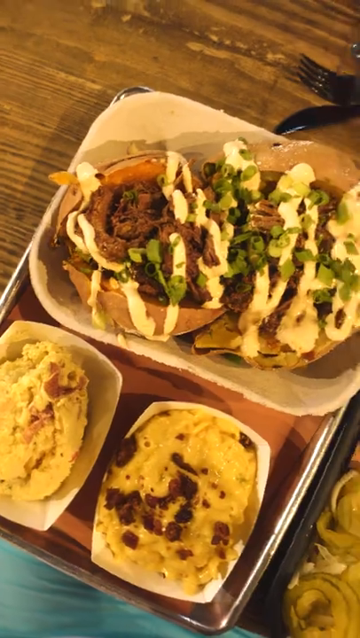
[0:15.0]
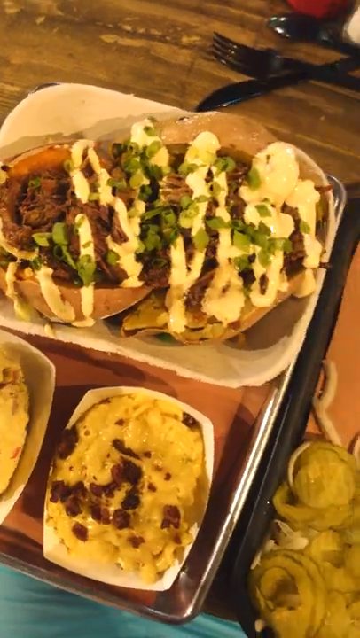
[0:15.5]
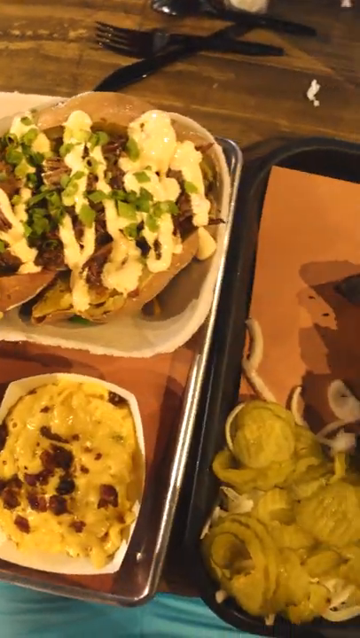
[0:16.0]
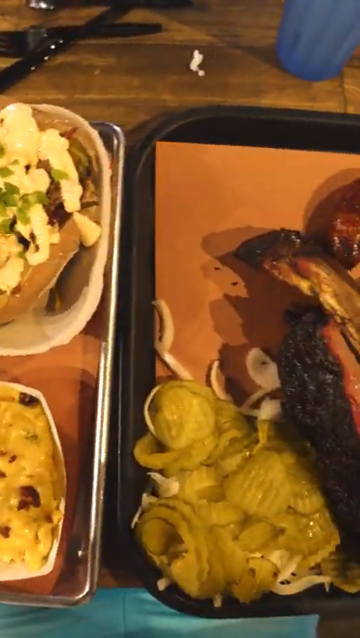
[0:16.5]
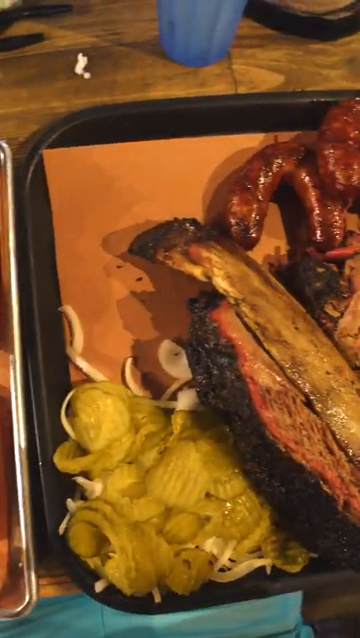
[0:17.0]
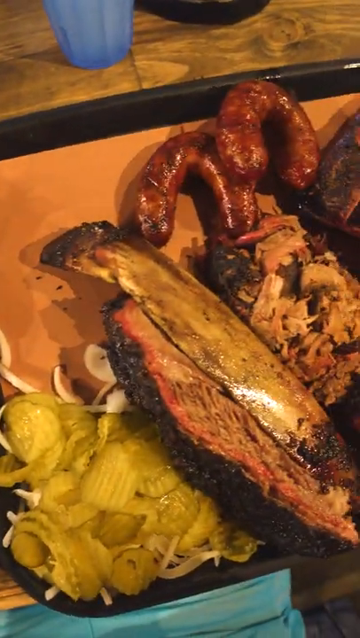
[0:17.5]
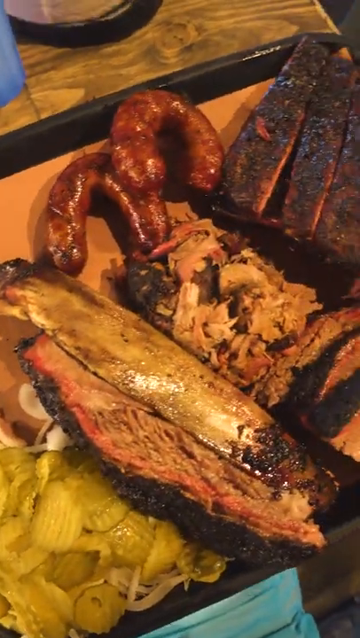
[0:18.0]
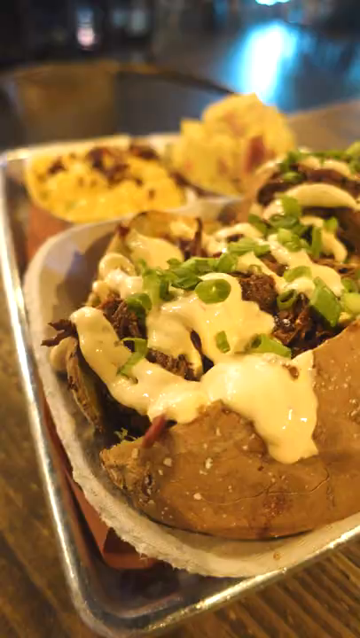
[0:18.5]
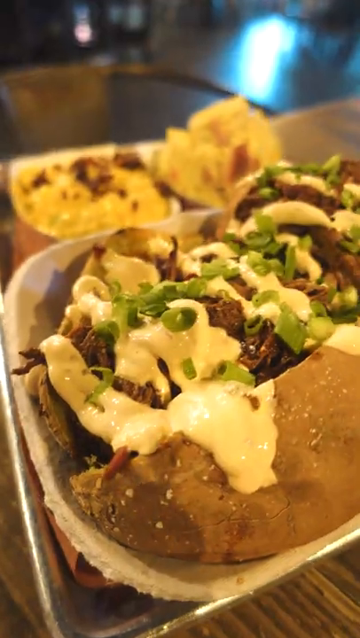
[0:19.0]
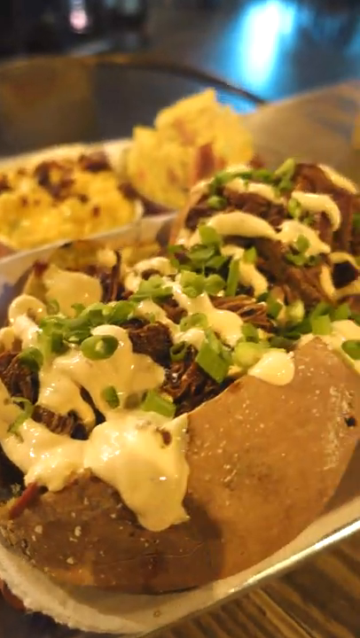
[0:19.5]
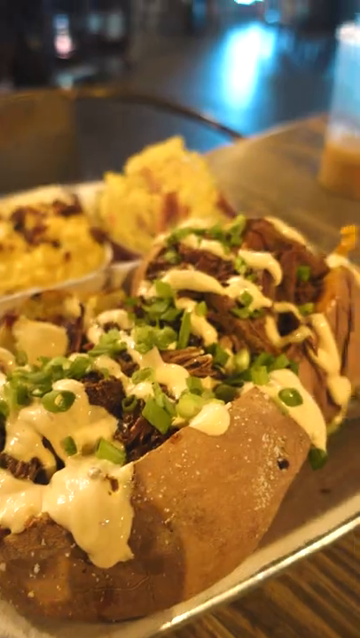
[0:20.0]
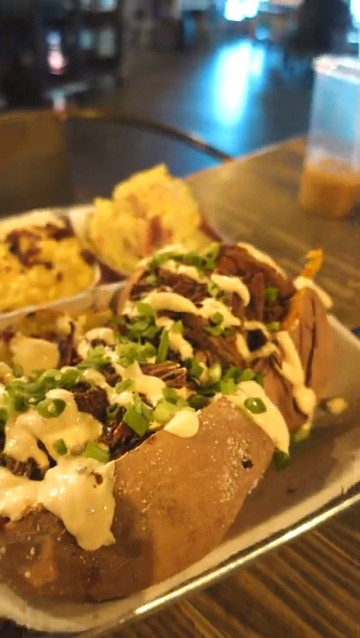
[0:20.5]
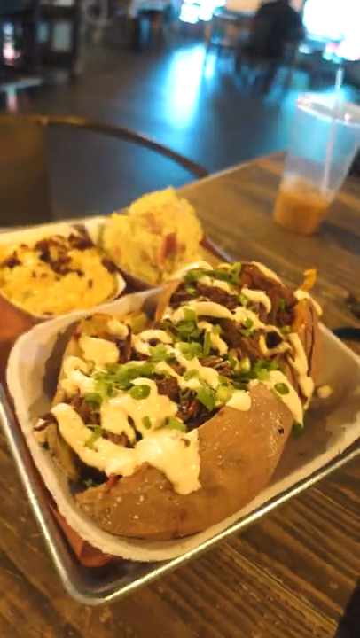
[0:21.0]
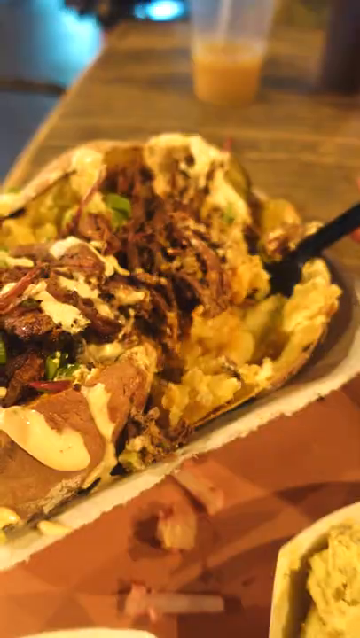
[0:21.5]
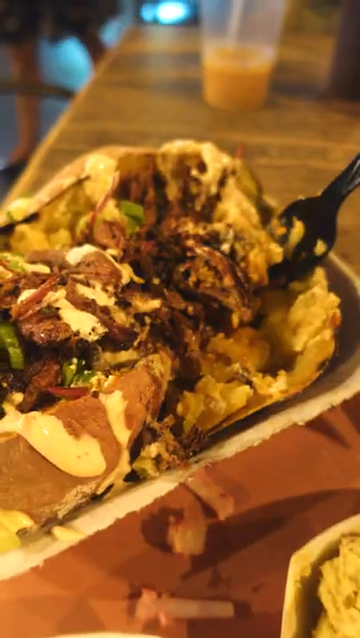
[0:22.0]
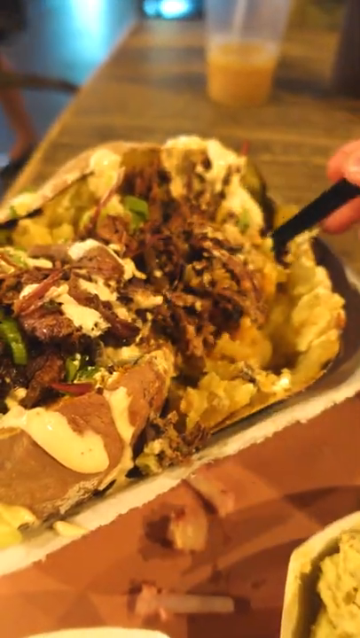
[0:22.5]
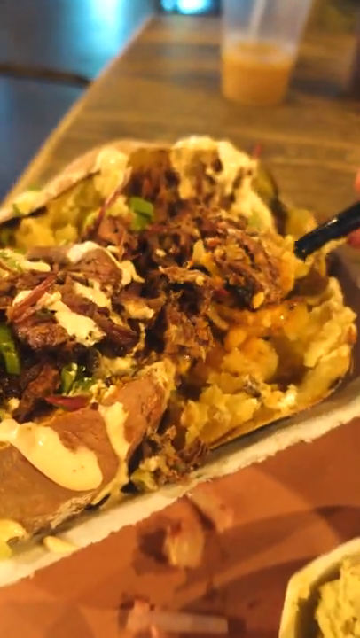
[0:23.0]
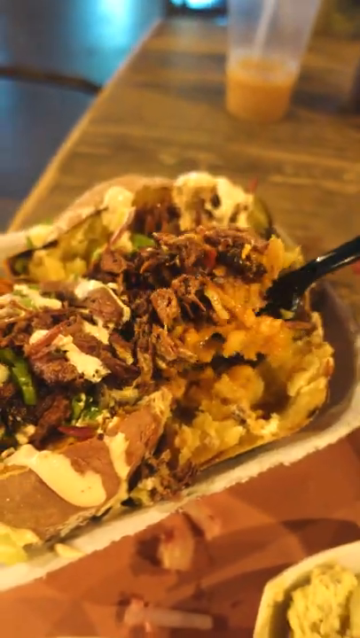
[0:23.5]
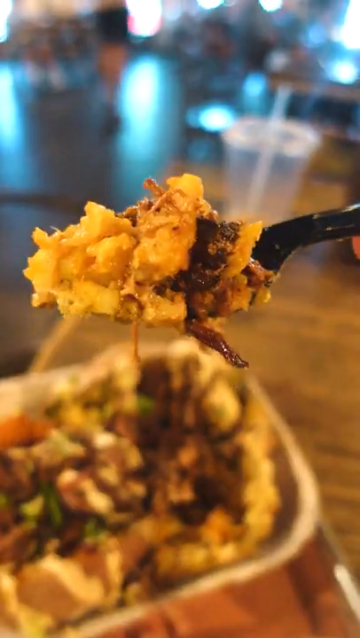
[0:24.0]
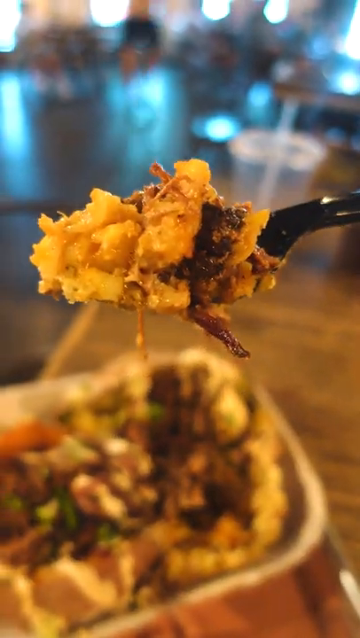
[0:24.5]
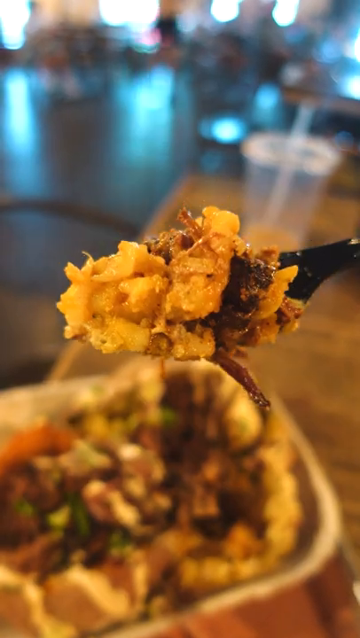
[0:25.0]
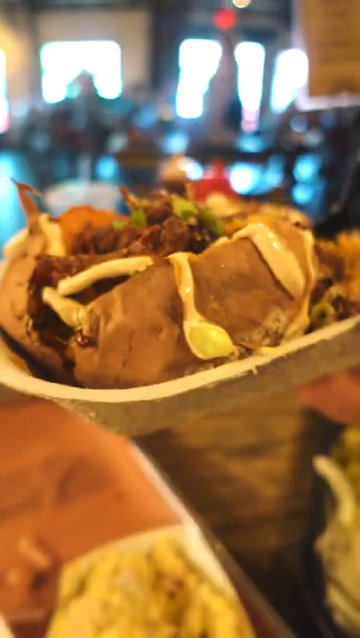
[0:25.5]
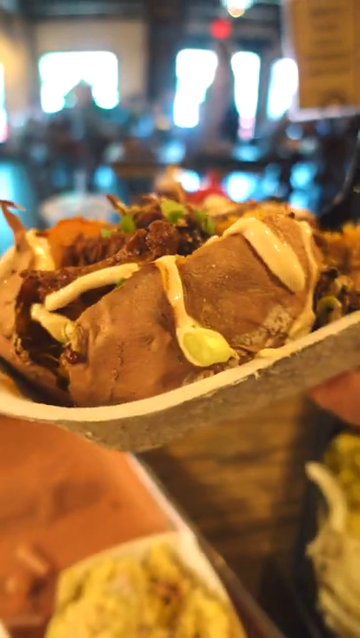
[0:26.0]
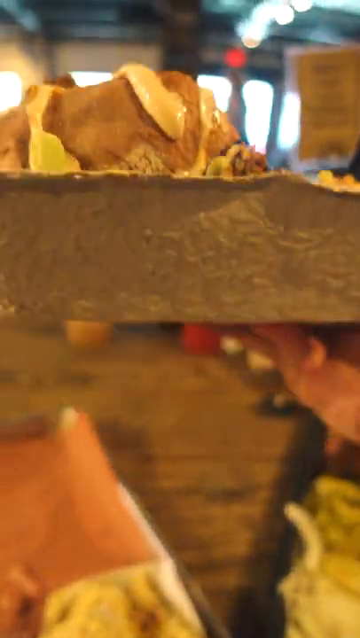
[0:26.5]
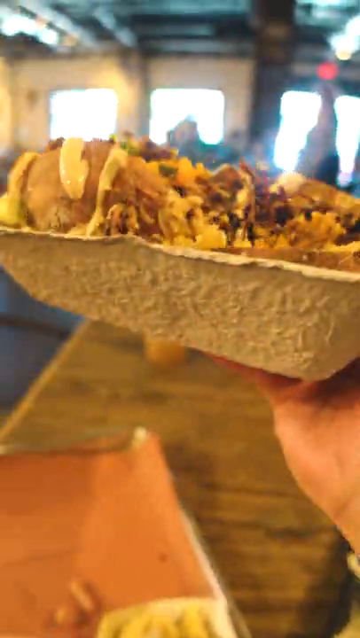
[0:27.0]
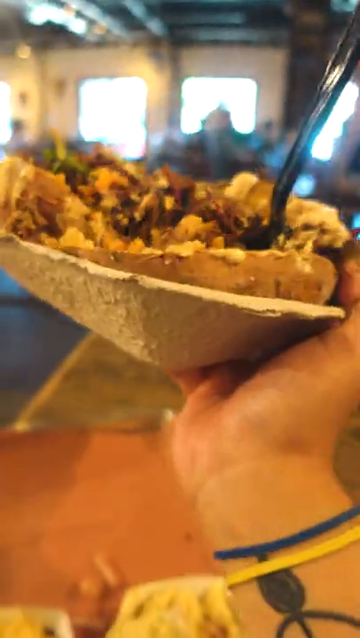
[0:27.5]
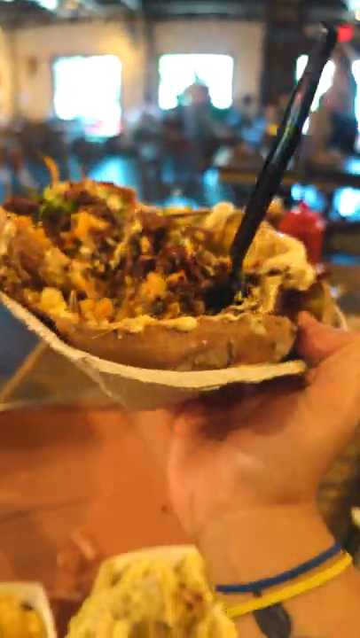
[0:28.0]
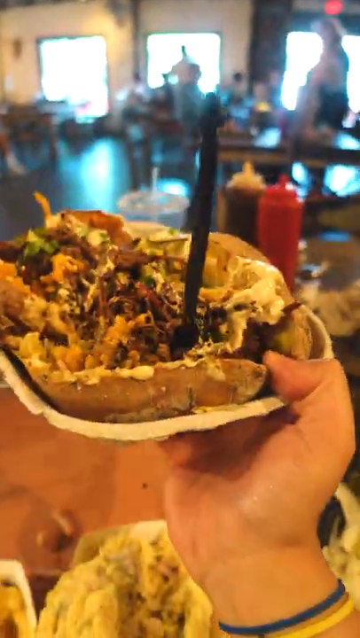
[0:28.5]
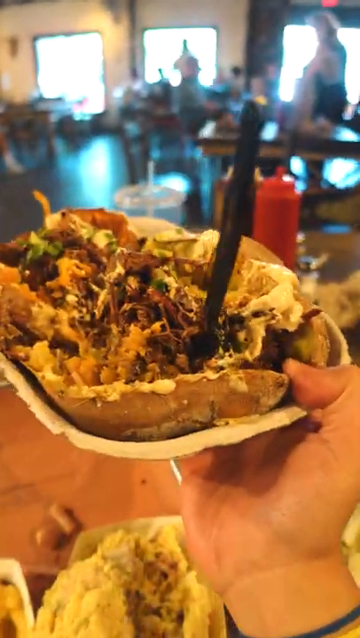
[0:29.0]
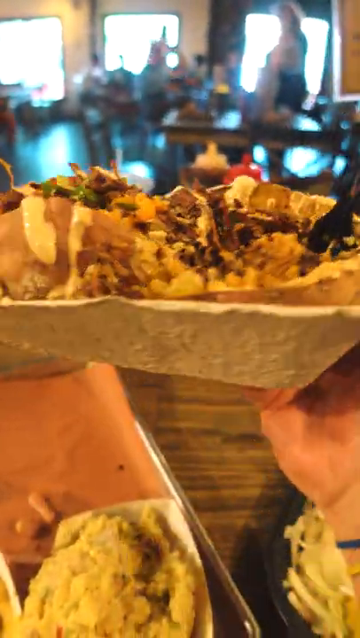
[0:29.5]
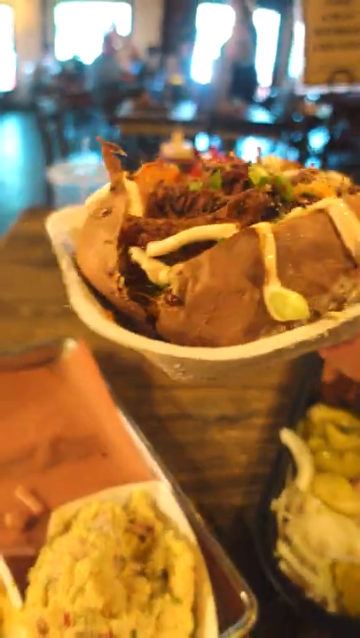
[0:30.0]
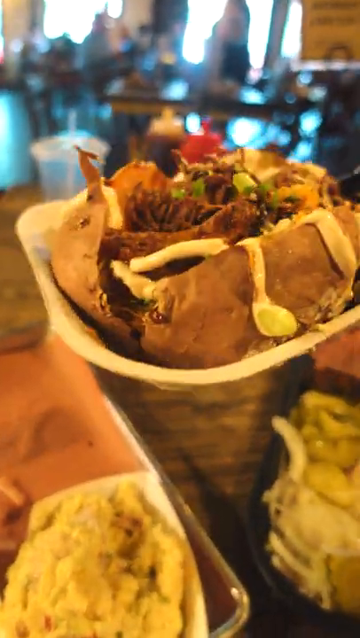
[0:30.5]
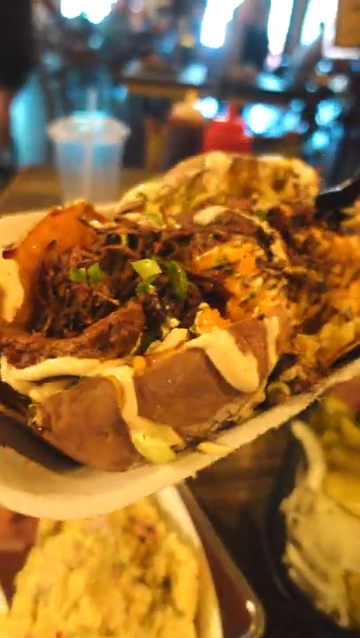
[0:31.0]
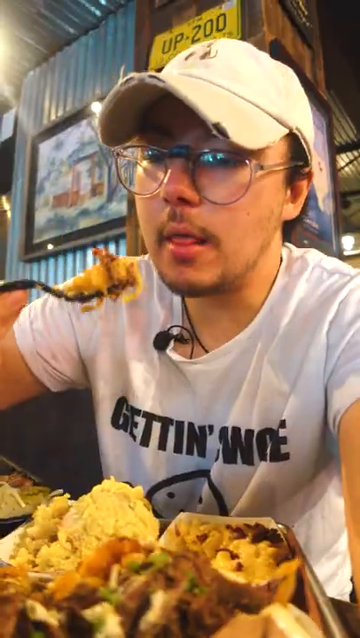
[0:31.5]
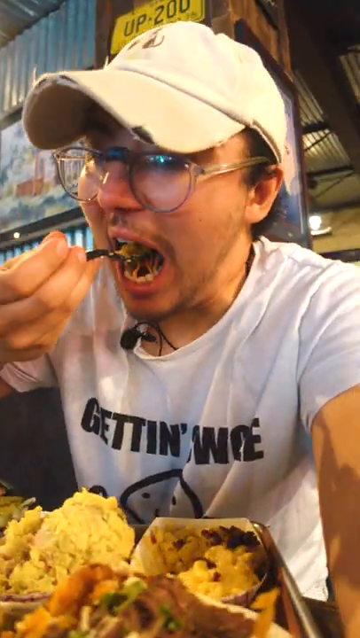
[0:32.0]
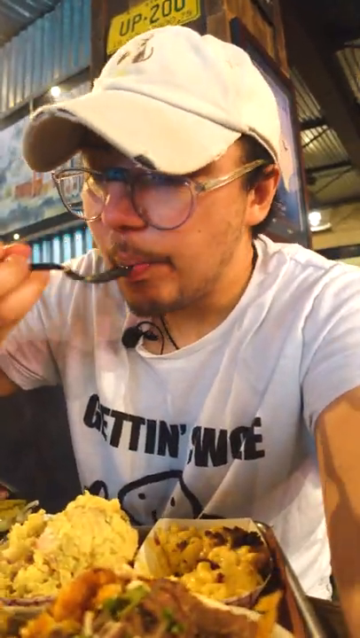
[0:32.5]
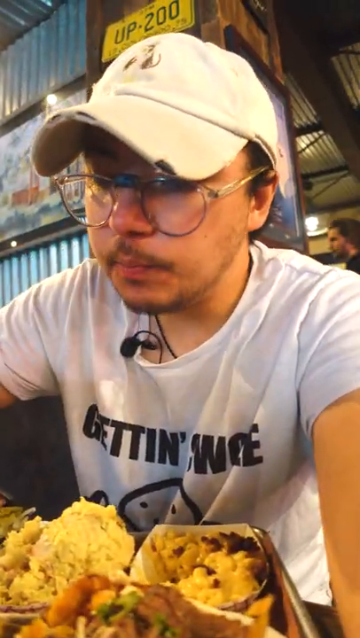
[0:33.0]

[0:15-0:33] The tray with the baked potatoes and the mac and cheese is seen from above. The baked potatoes look like they are topped with brisket, then mayonnaise, then green onions, and the mac and cheese looks like it has bacon chunks on it. On the table right behind the tray are a plastic spoon, knife and fork. The camera pans over to pickles and onions, brisket and two sausages. A close-up shows the loaded baked potato, or possibly bread; it is shaped like a potato and cut open, with brisket, sauce and green onions on top. The person recording puts the plastic fork into the food, which looks like a baked potato, and brings the forkful up to the camera, showing potato and some dark cooked brisket. The person then holds up the cheap-looking paper tray holding the potato and shows it to the camera. Their hand and wrist are visible; they wear a couple of thin bracelets, one yellow and one blue, and have what looks like a tattoo. In the background are other tables with people moving around, and in the nearer background are a red squirt bottle and a transparent squirt bottle with some brown stuff in it, apparently ketchup and barbecue sauce. The view switches to the man eating, who appears to be a YouTuber, possibly named Sen Pai or Sen Kai. He brings the forkful of baked potato up to his mouth and wears a clip-on microphone. Behind him are a corrugated metal wall with a painting on it and a wooden wall; right above his head on the wooden wall is a yellow license plate that says "UP-200". He wears a worn white cap, round plastic-framed glasses with some tape in the middle, and a white t-shirt that says "Gettin'" followed by a word that is possibly "Swole", and he has a little facial hair. He puts the food in his mouth and takes out the empty fork.